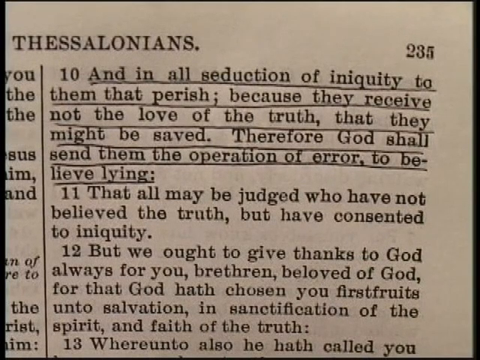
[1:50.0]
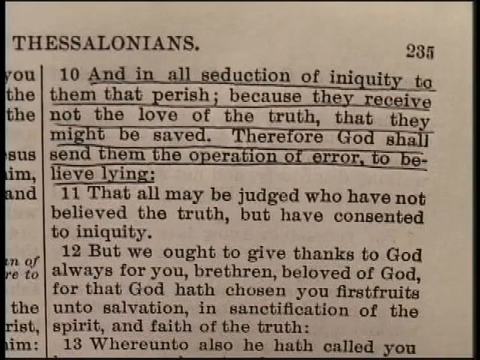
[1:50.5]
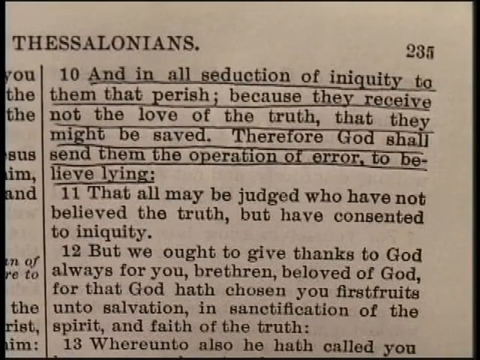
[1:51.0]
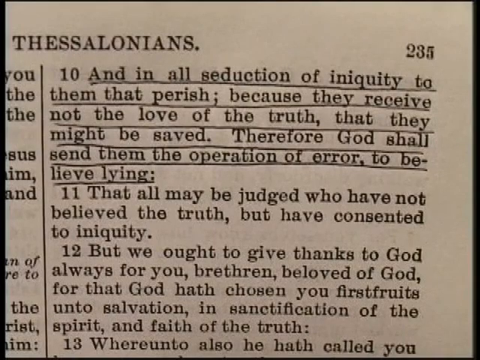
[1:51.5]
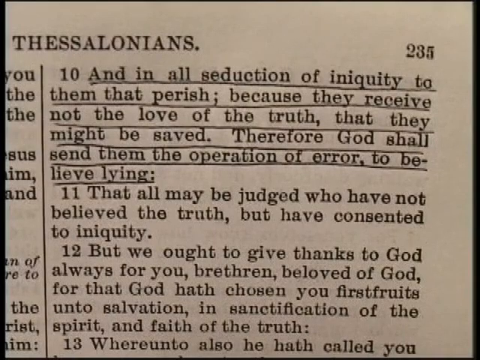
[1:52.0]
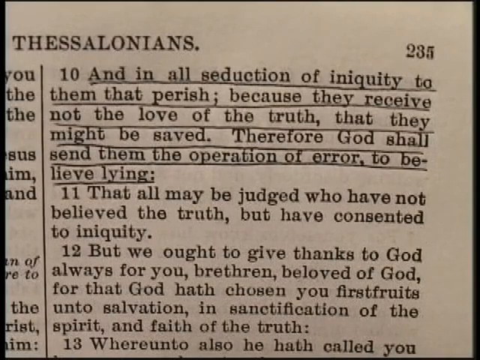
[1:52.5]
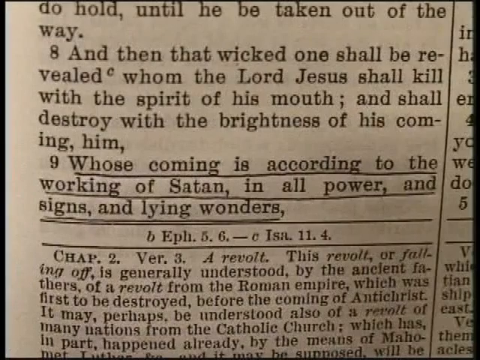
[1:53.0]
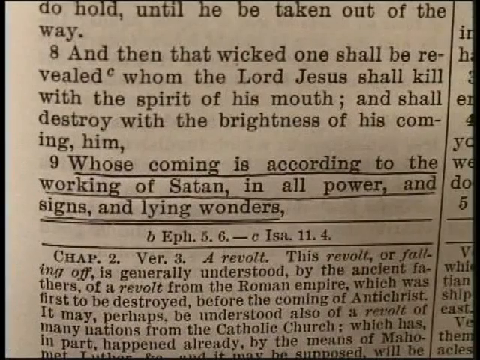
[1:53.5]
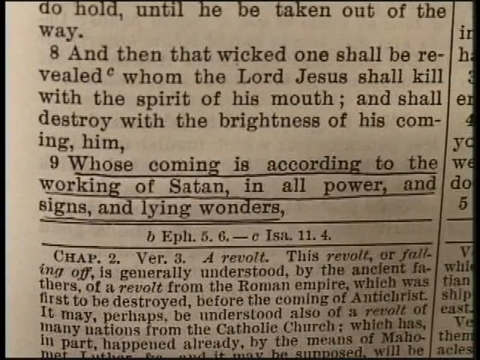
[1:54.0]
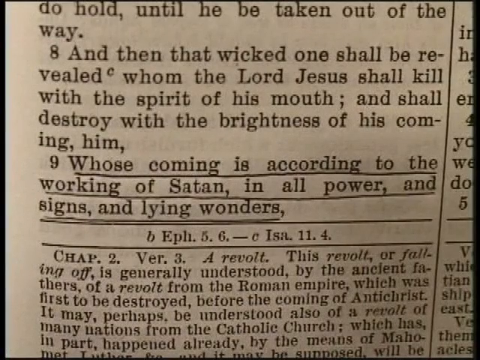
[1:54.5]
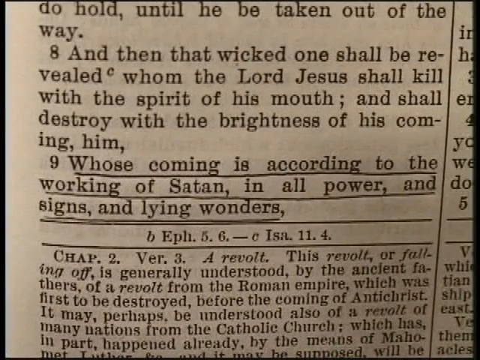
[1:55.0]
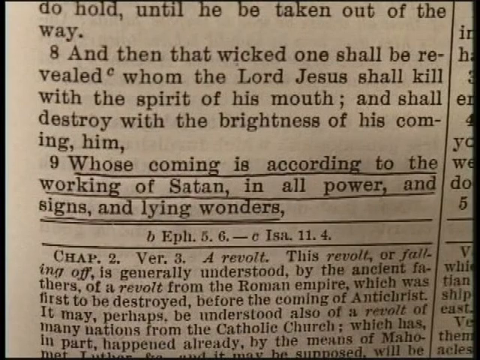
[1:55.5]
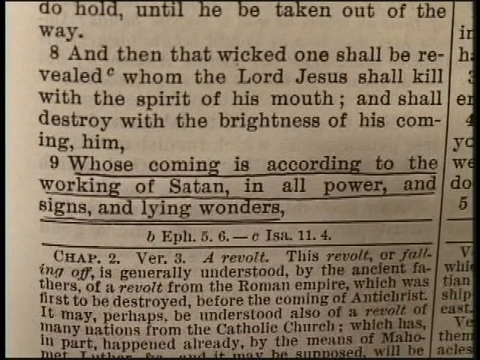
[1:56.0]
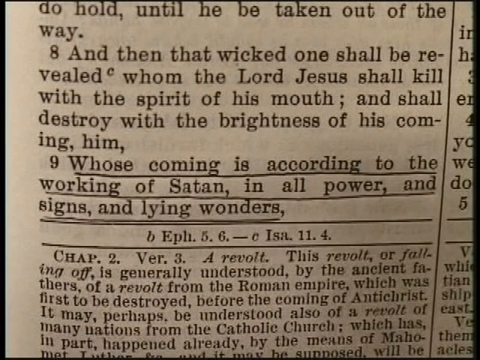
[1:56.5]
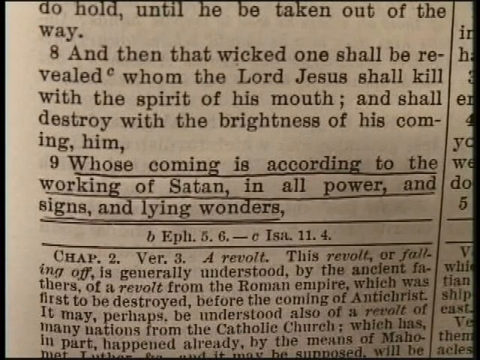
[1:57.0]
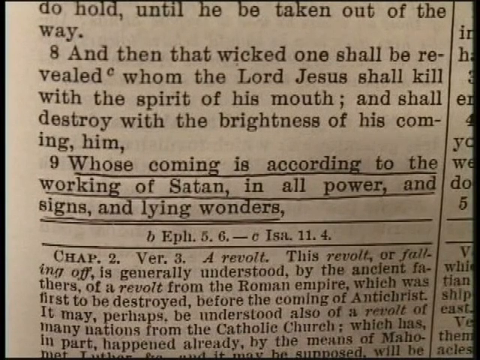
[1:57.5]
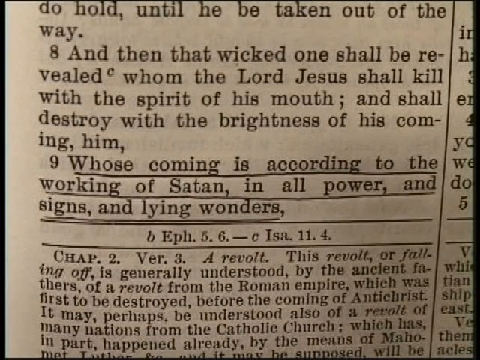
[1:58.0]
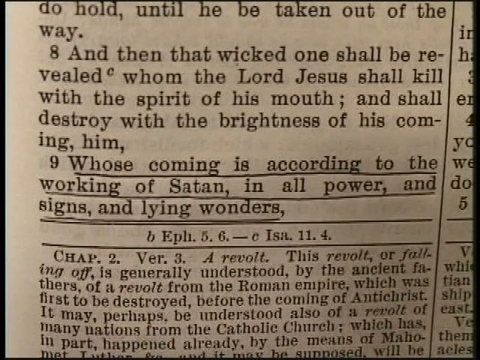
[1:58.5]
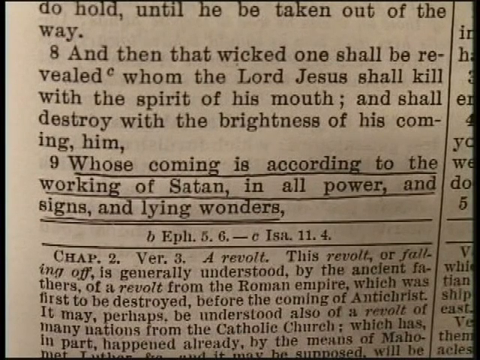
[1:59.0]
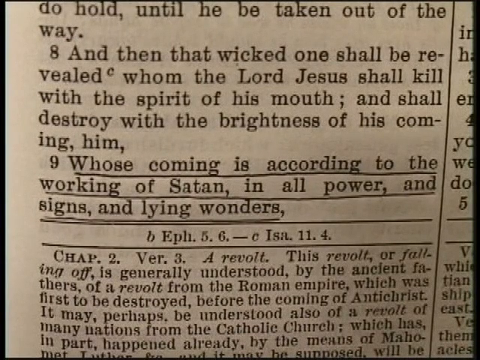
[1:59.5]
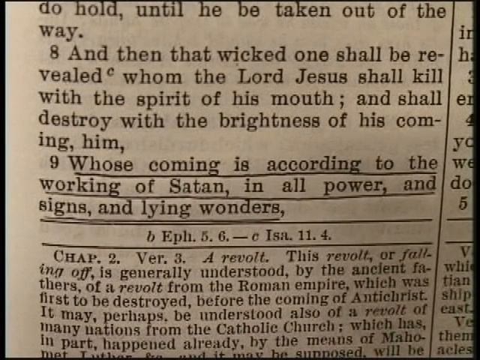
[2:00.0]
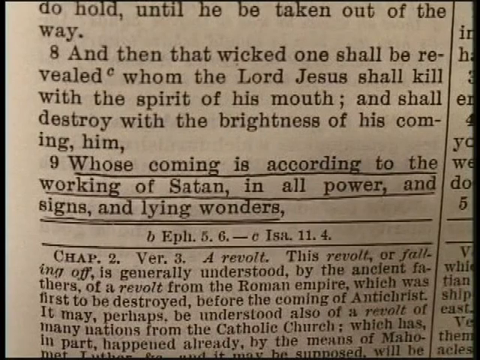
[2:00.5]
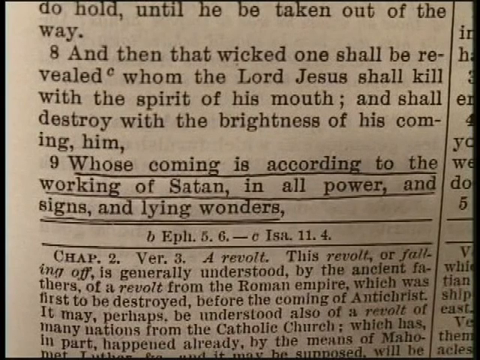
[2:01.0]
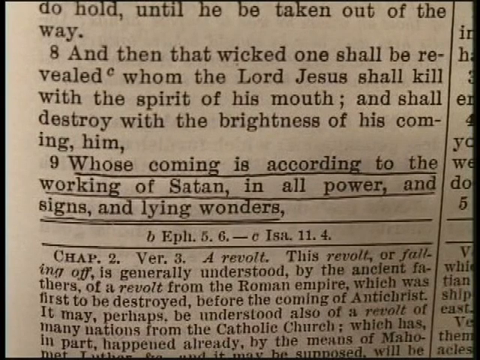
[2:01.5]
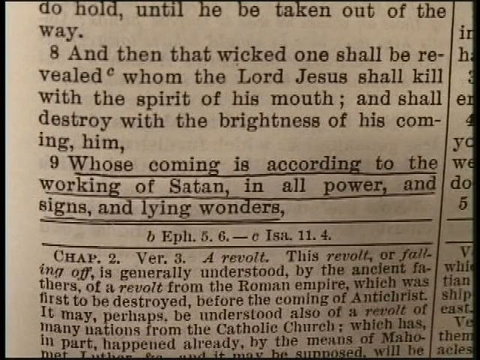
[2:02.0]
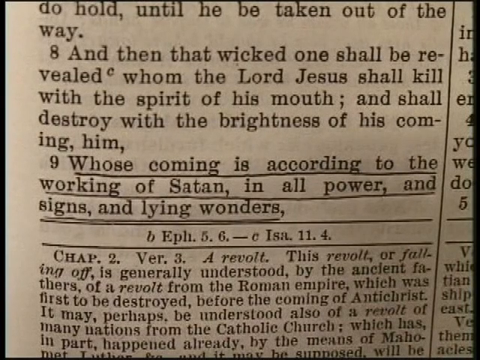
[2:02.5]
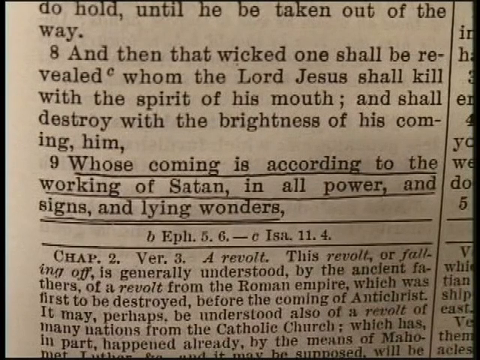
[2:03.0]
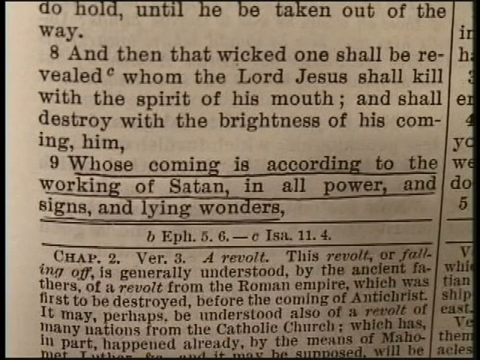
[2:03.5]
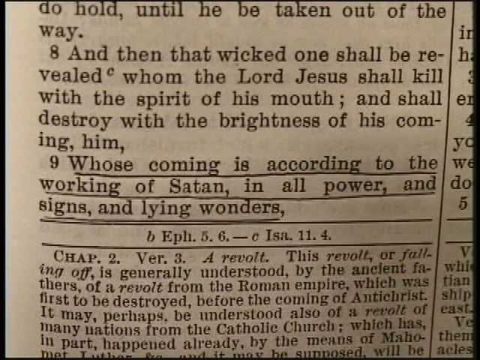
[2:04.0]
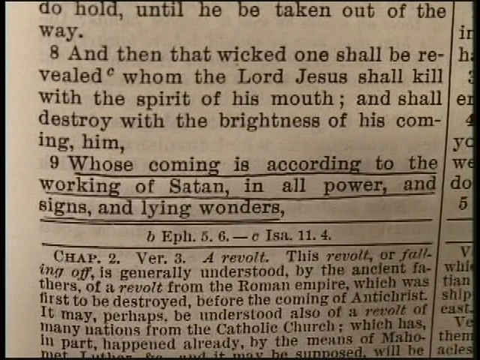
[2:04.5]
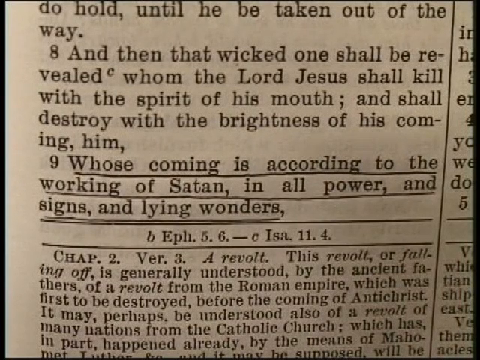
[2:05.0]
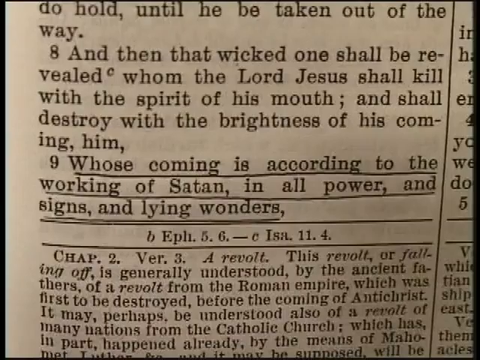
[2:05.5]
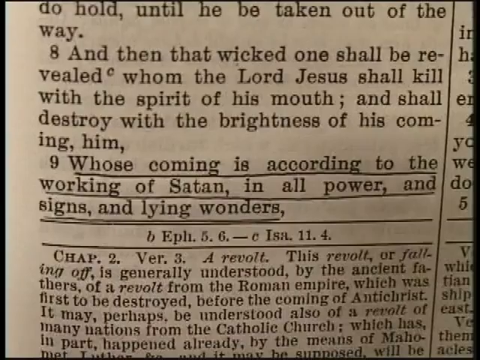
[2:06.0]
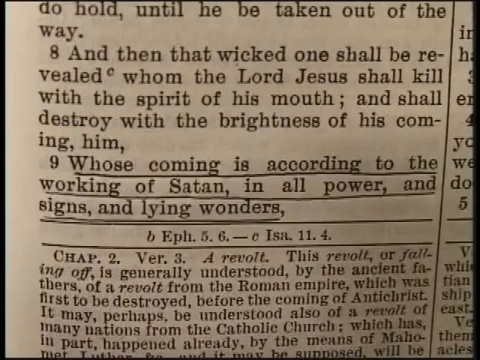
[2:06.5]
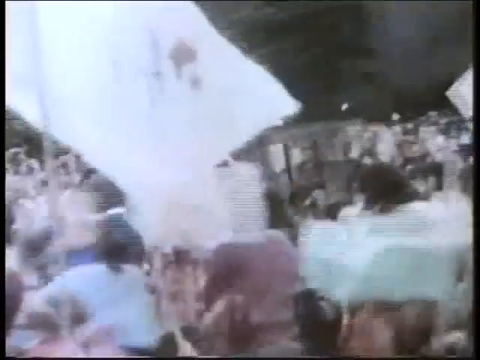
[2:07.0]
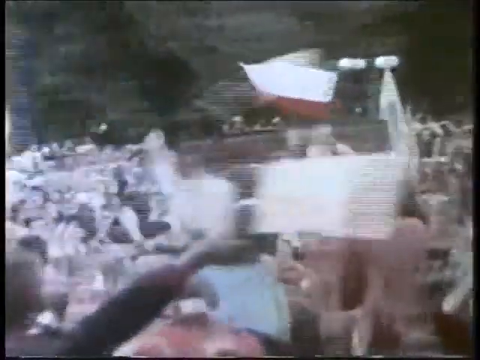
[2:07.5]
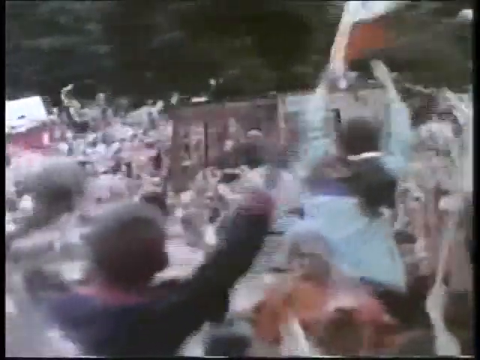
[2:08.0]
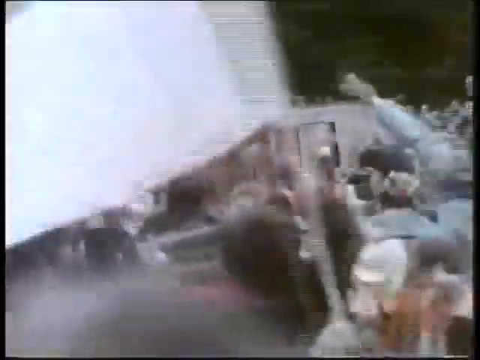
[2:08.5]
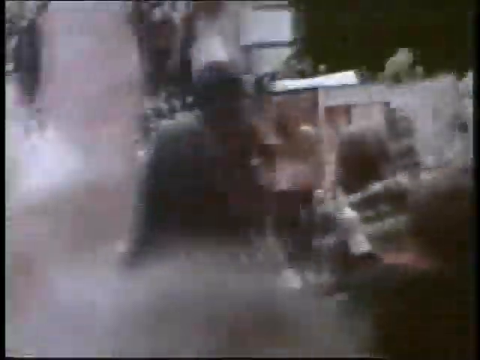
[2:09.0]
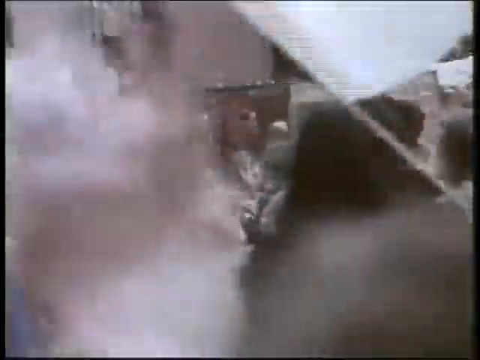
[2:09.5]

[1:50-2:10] What appears to be the left page of a book is shown, focusing on the leftmost column of writing partway down the page, possibly towards the bottom; a thin line to the right separates the leftmost column. The text reads "until he be taken out of the way. 8 And then that wicked one shall be revealed", with a small c at the top, then "whom the Lord Jesus shall kill with the spirit of his mouth; and shall destroy with the brightness of his coming". Verse 9 is underlined in biro: "Whose coming is according to the working of Satan, in all power, and signs, and lying wonders". Below is a thin black horizontal line, then a line reading "BEPH.5.6-C ISA.11.4", with a line running left to right beneath it. The next line says "CHAP 2" followed by "A REVOLT. This revolt or falling off, is generally understood by the ancient fathers, of a revolt from the Roman empire, which was first to be destroyed, before the coming of antichrist. It may perhaps be understood also of a revolt of many nations from the Catholic church", all in italic serif type. Finally, the scene moves to video footage.